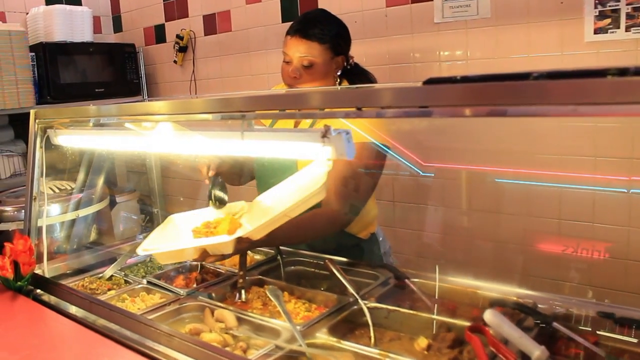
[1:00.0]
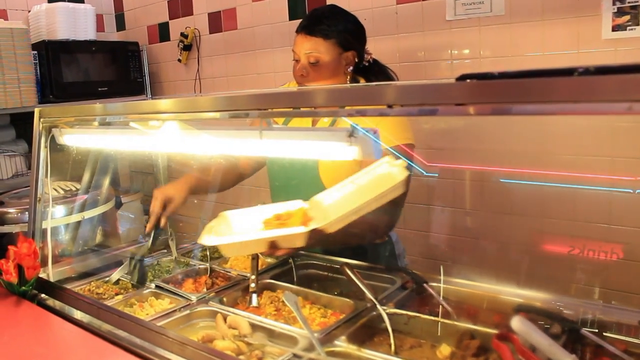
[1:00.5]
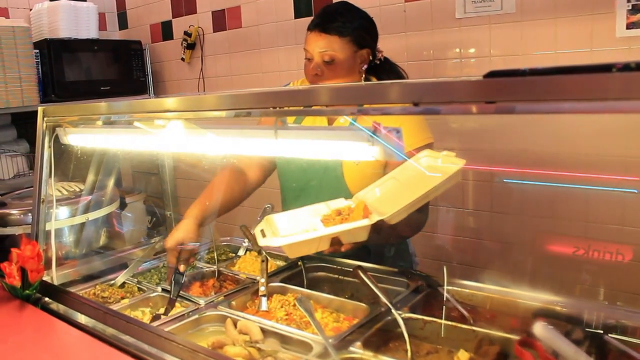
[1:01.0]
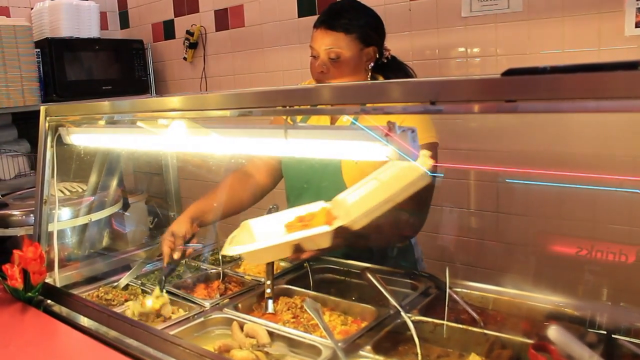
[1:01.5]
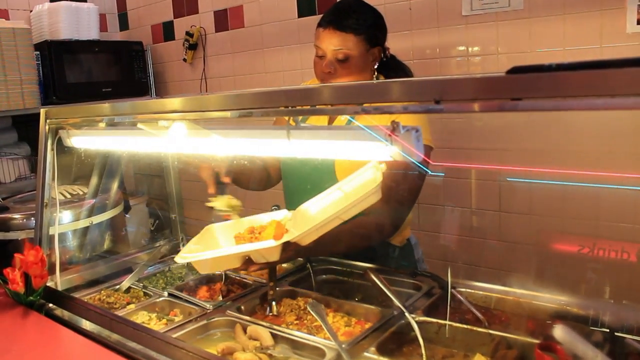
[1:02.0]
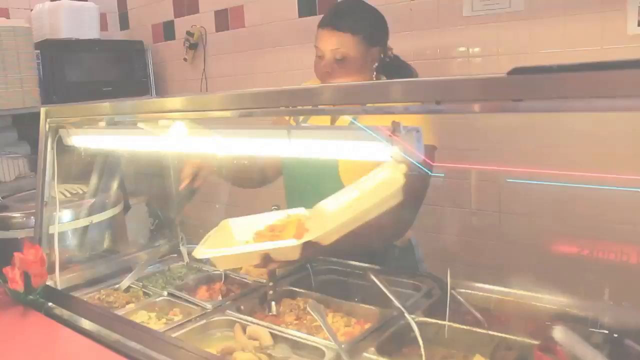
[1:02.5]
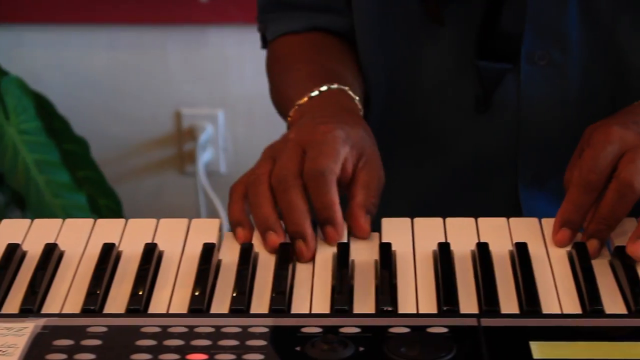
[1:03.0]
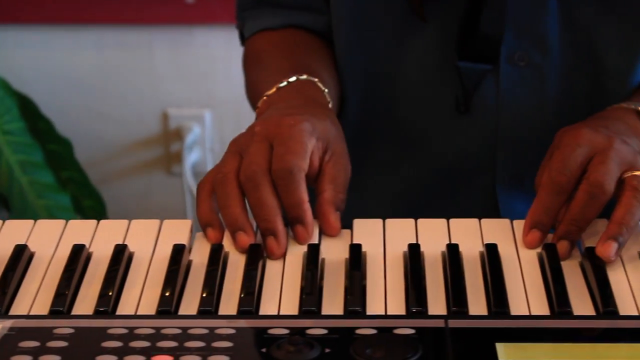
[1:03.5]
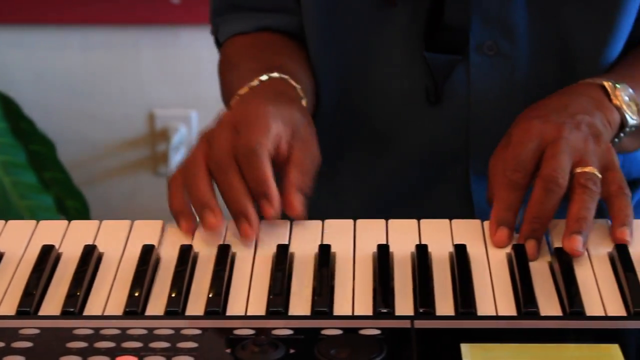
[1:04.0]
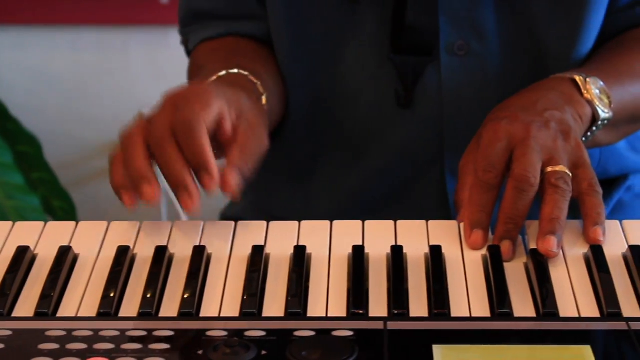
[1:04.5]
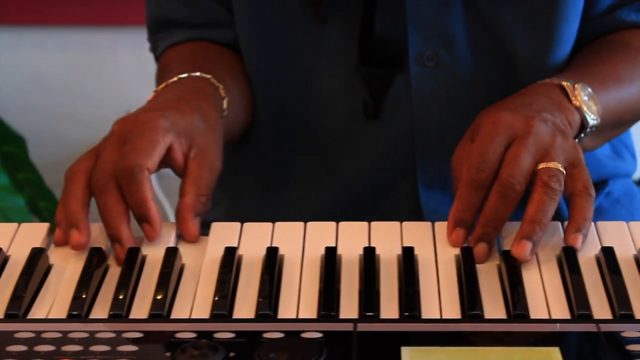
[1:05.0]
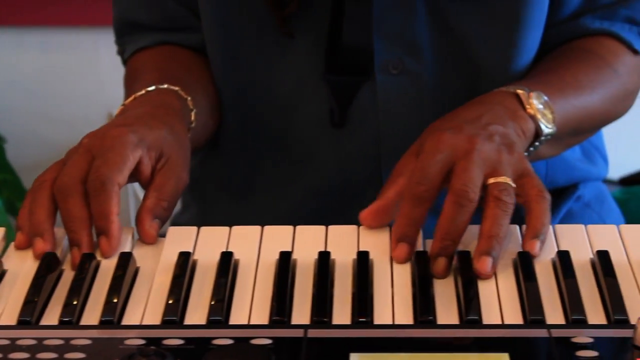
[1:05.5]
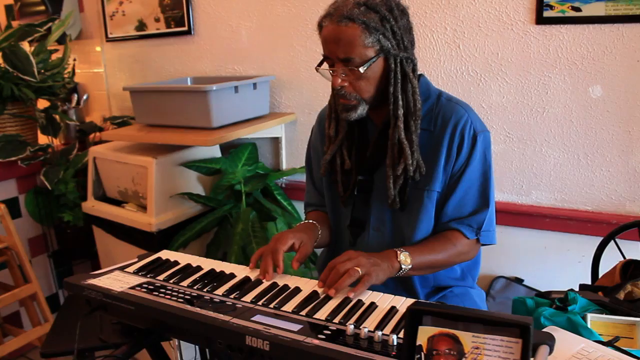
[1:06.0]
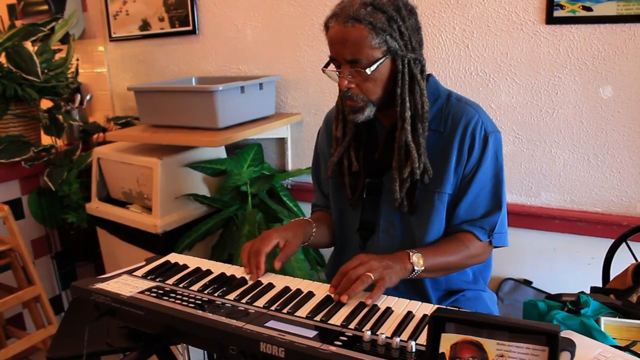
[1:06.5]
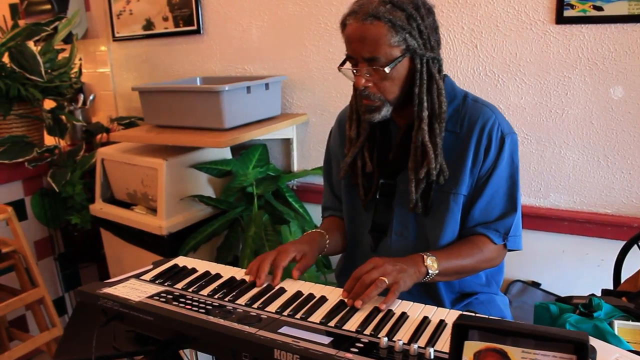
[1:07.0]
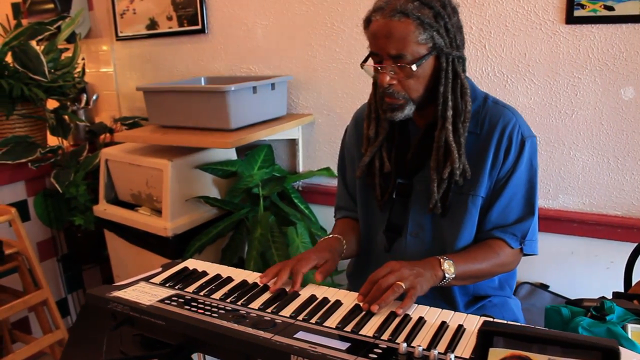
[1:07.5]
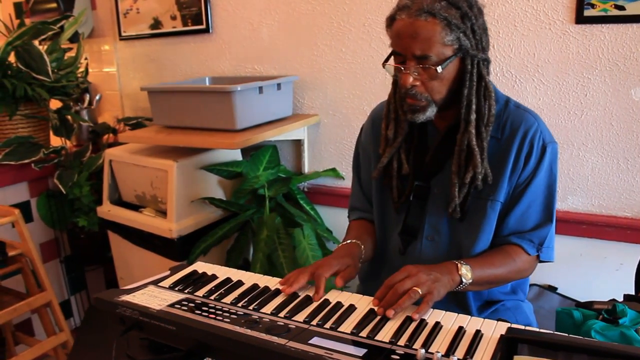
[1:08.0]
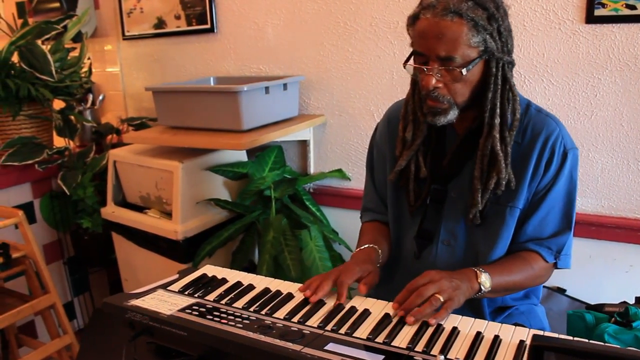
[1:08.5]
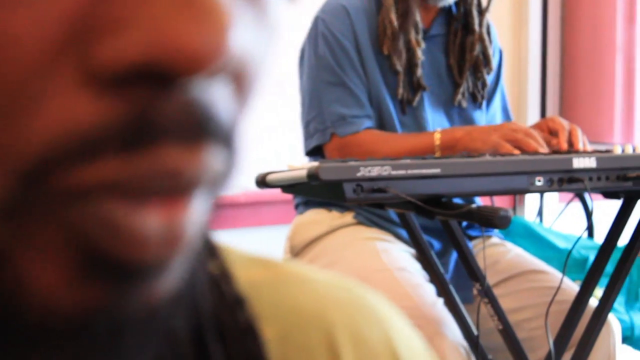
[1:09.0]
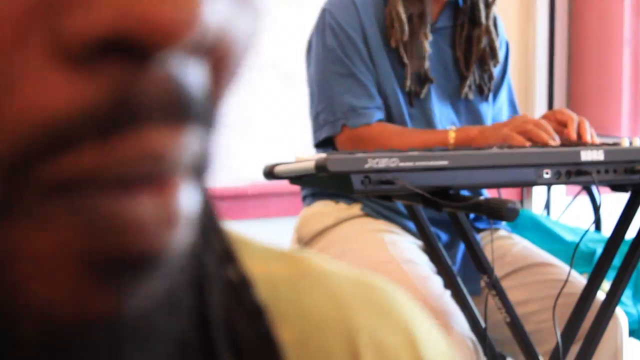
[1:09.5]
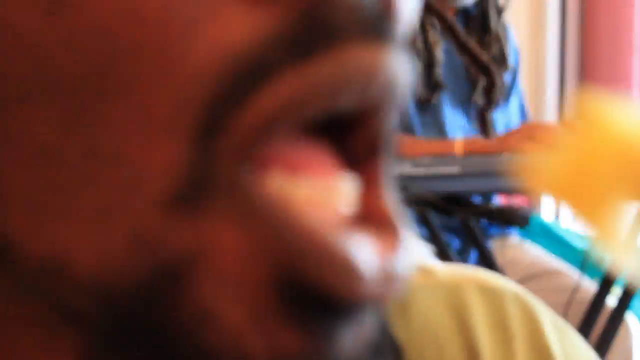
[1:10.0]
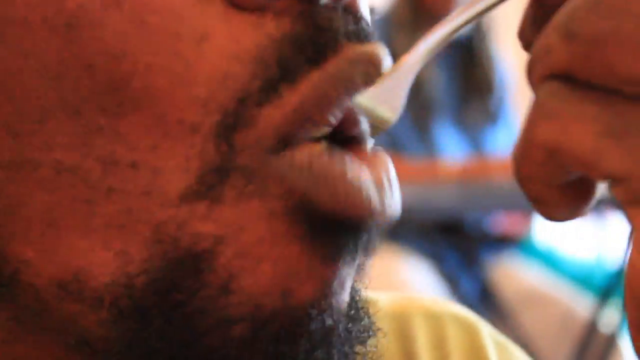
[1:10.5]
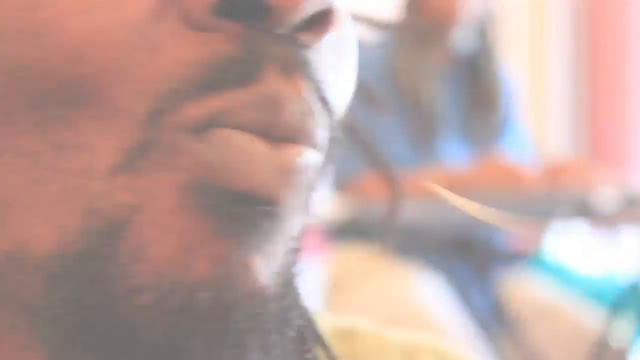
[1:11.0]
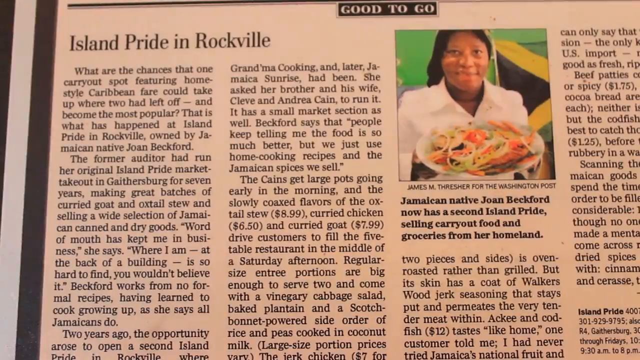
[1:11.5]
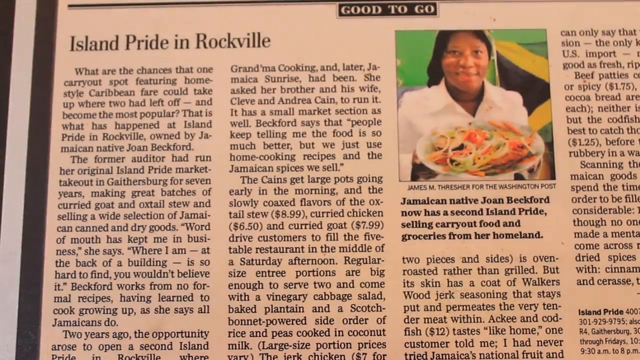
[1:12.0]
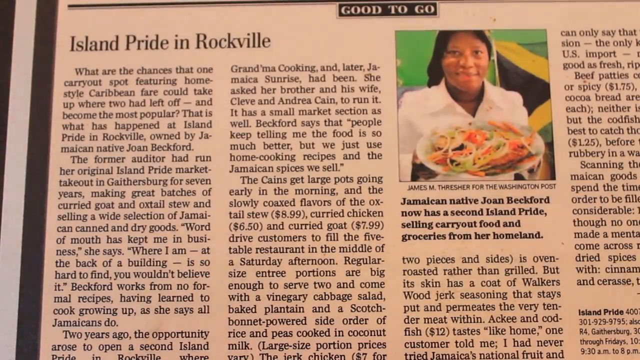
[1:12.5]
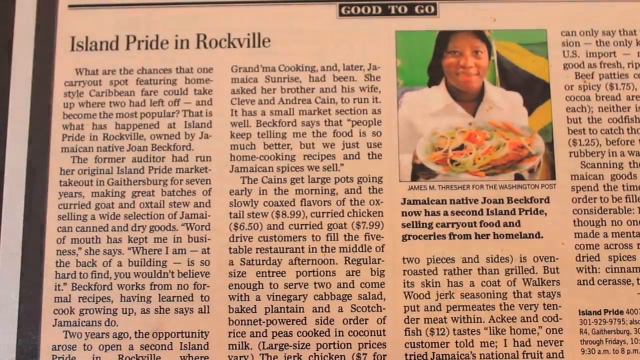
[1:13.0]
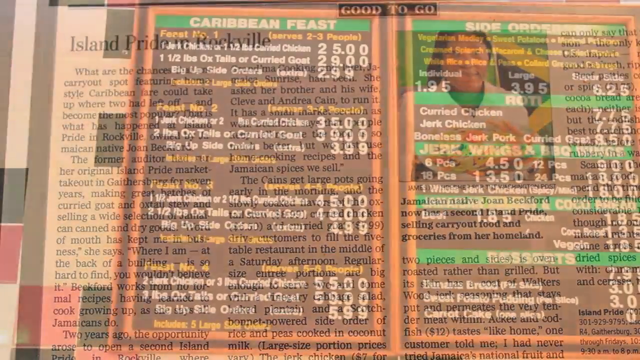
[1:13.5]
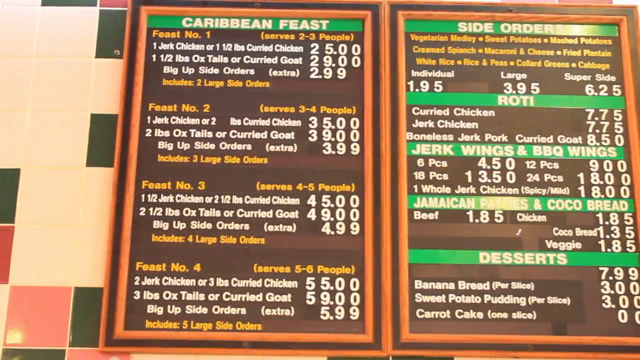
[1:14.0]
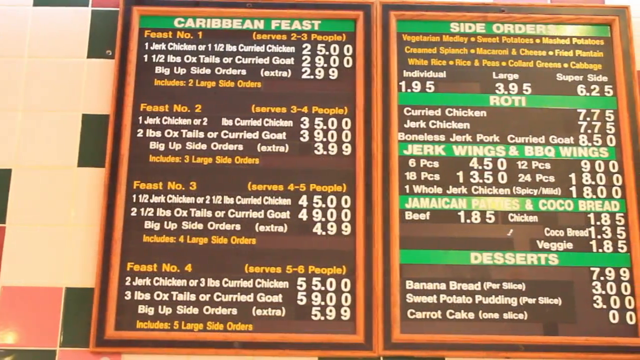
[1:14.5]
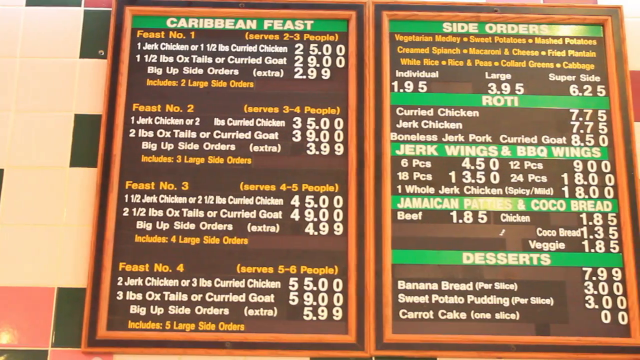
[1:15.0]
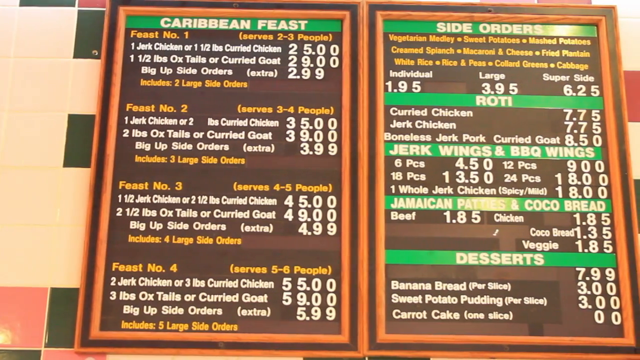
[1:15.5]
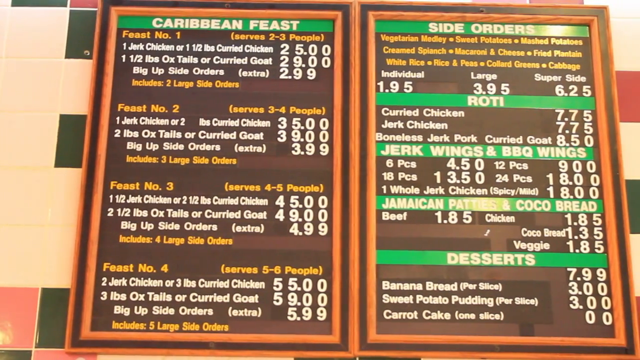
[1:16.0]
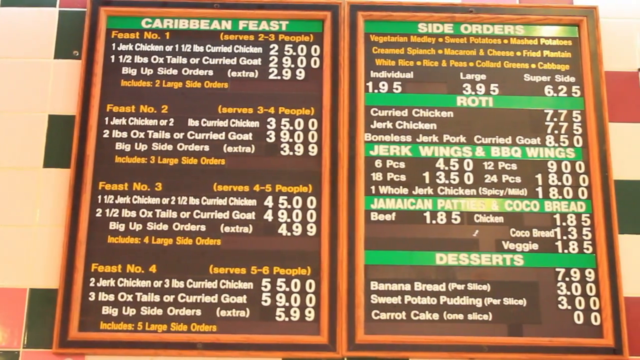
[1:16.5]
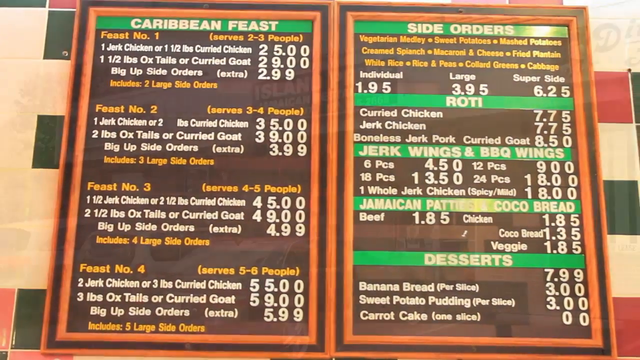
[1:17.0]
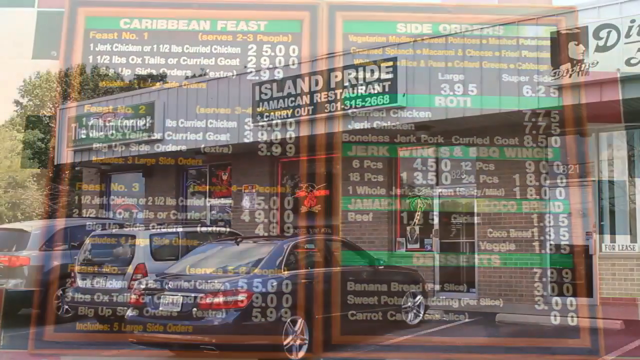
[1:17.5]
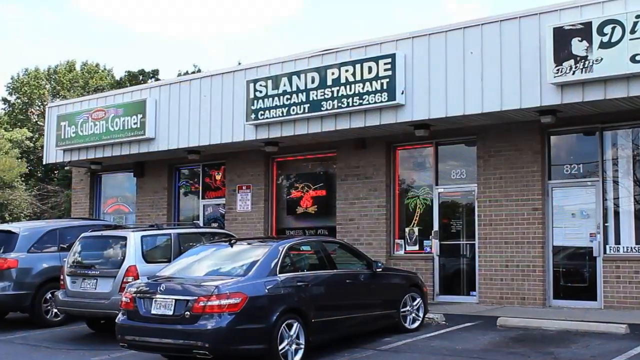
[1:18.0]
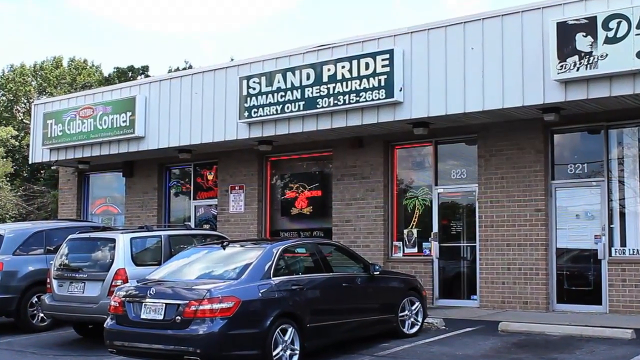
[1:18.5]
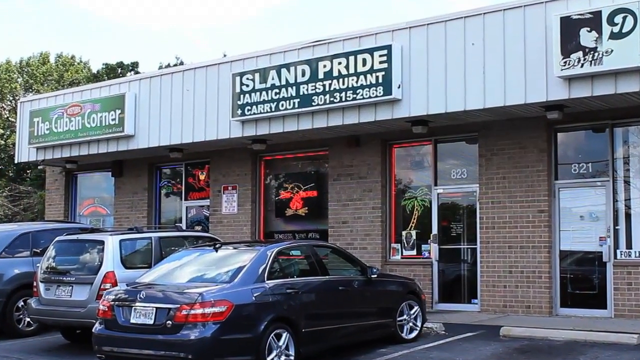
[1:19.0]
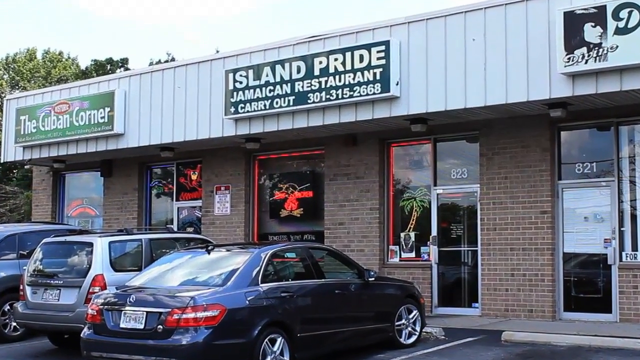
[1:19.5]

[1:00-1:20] The scene switches to a man playing a piano. The camera is zoomed in on his hands on the keys. He wears a ring on a finger of his left hand and a watch on his left wrist, and some sort of jewelry on his right hand. A menu is then shown for a "Caribbean feast," "feast number one," for two to three people, listing jerk chicken or one pound of curry chicken, one and a half pounds of oxtail or curried goat, and side orders.